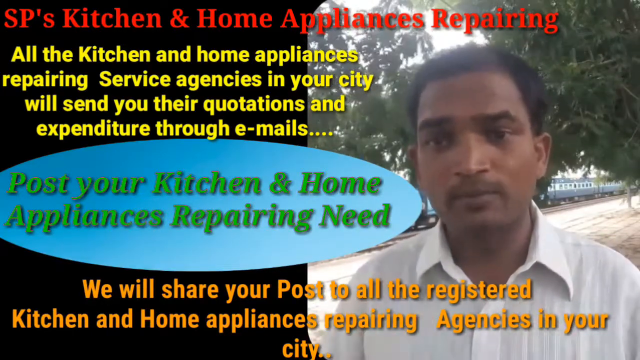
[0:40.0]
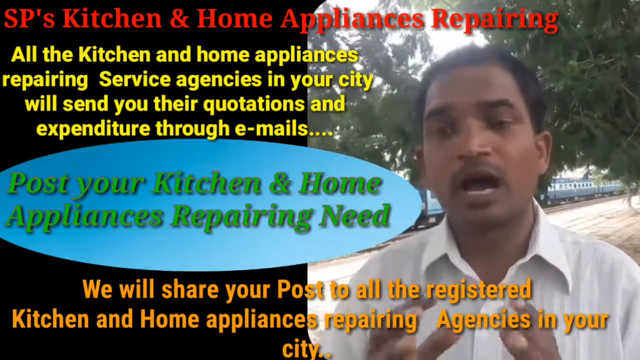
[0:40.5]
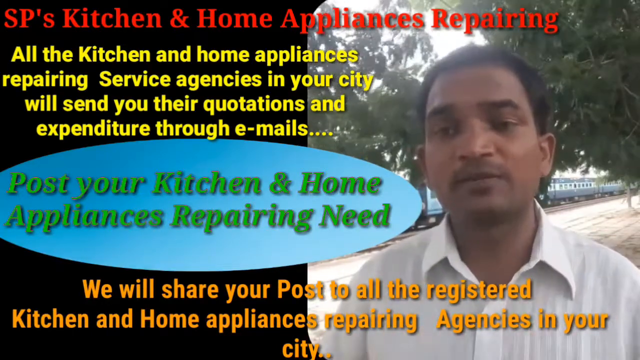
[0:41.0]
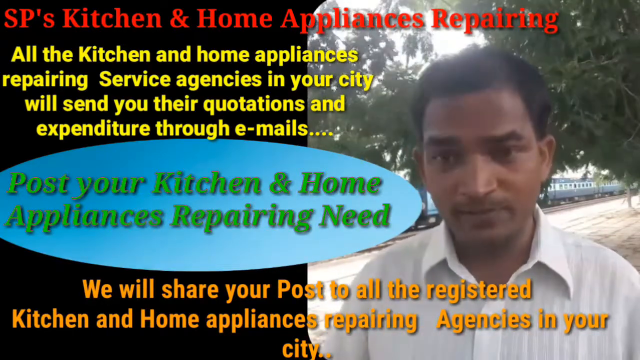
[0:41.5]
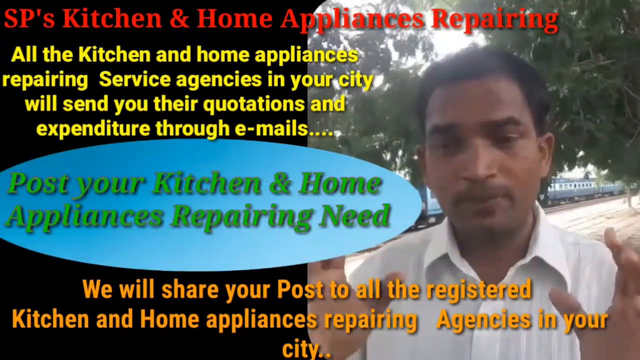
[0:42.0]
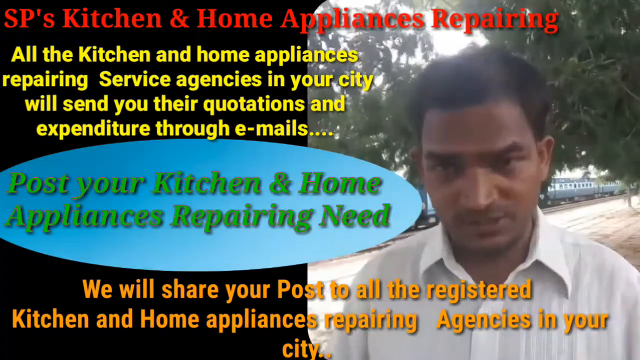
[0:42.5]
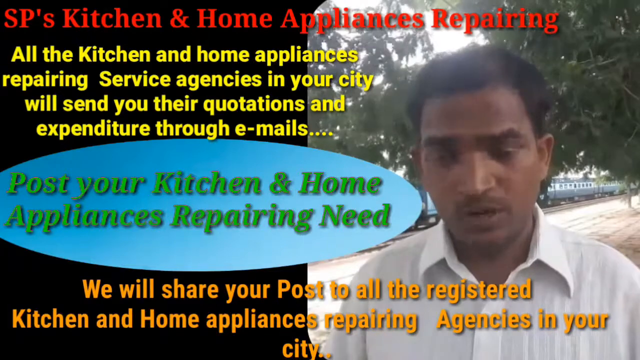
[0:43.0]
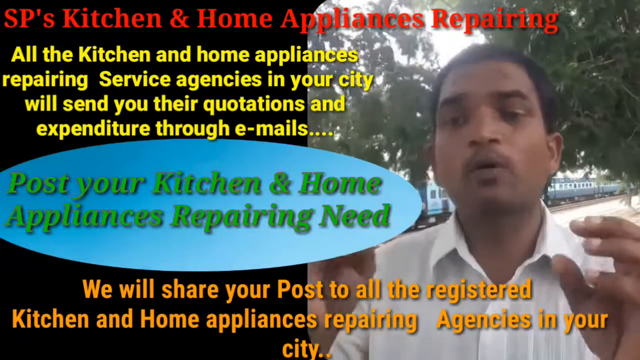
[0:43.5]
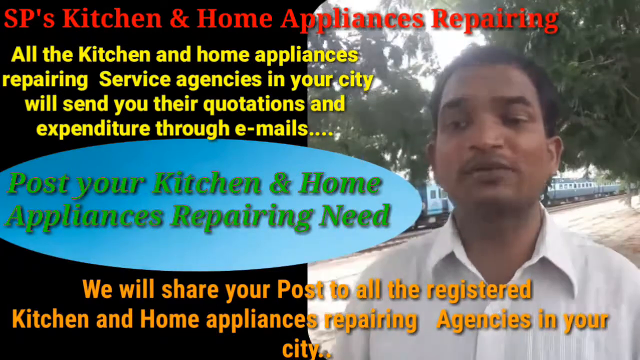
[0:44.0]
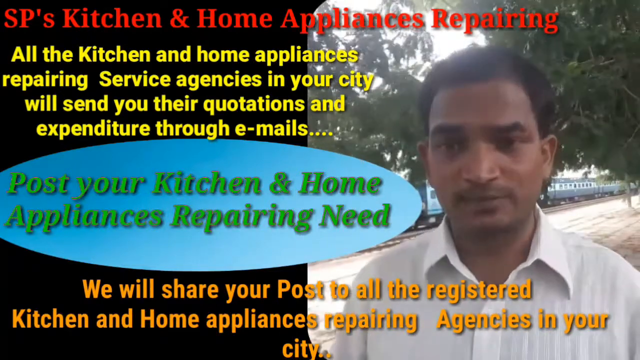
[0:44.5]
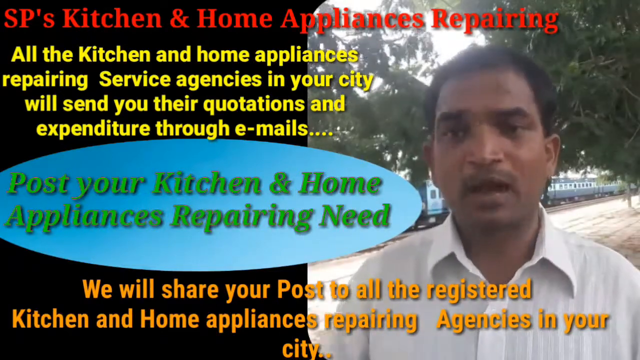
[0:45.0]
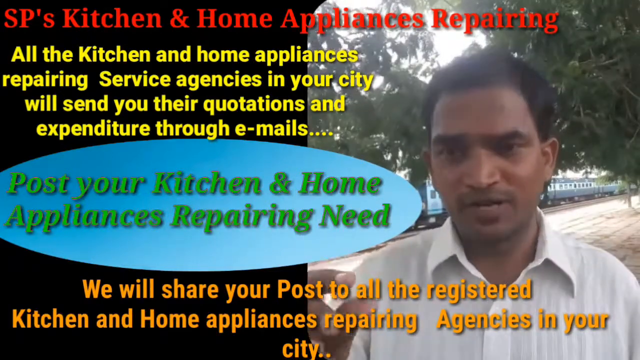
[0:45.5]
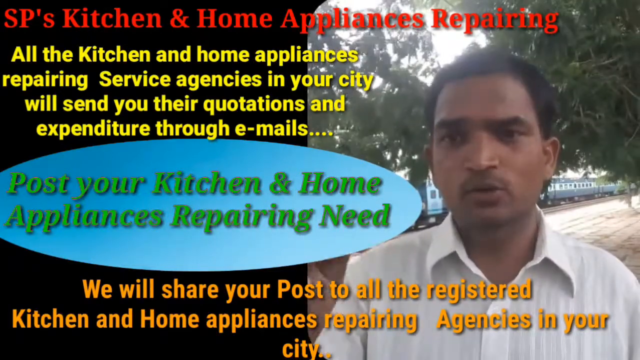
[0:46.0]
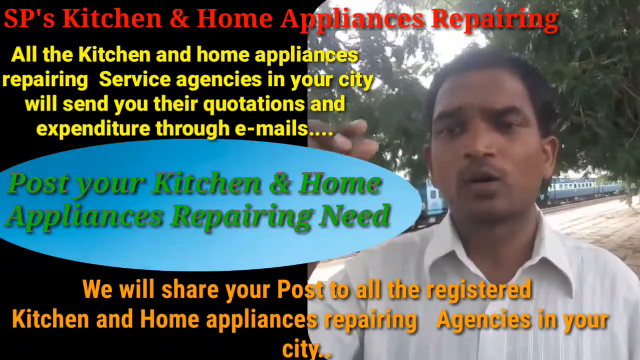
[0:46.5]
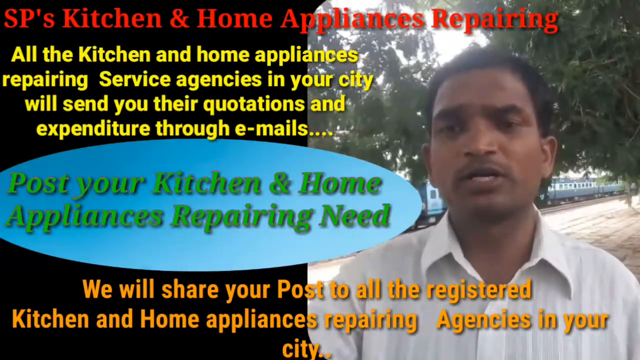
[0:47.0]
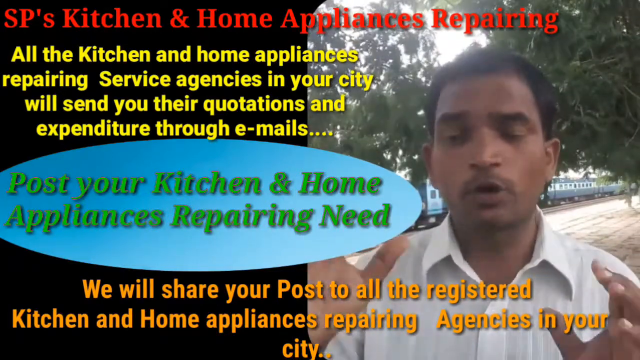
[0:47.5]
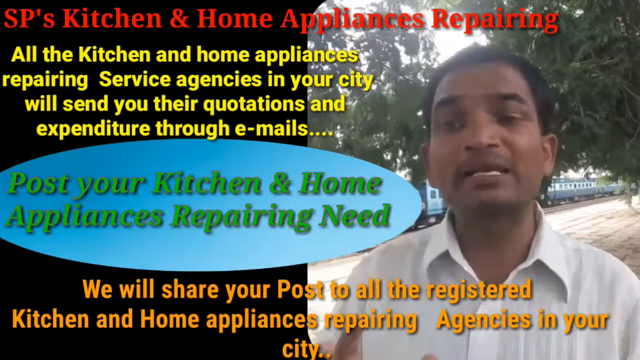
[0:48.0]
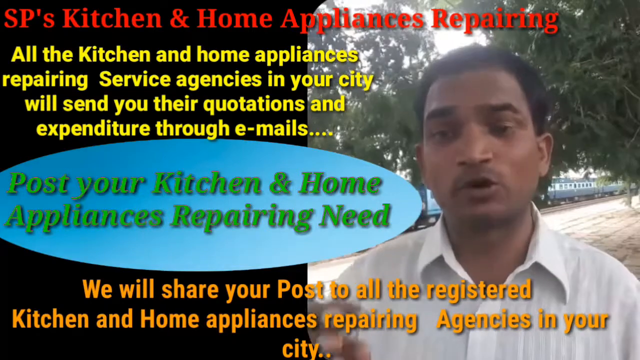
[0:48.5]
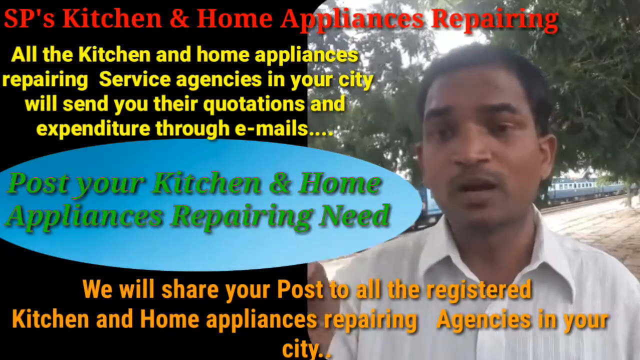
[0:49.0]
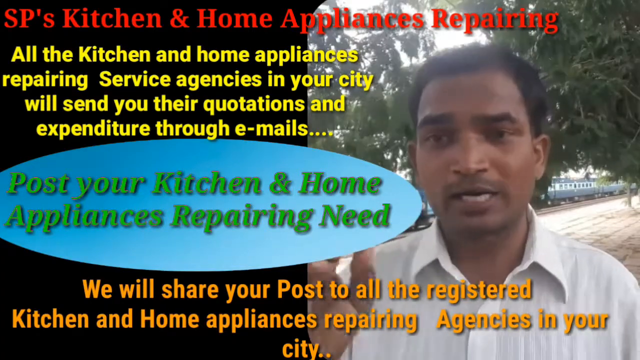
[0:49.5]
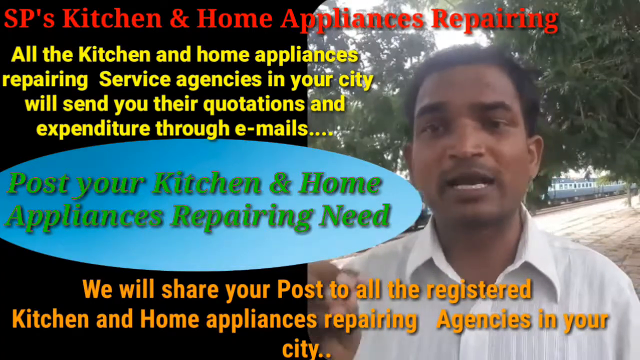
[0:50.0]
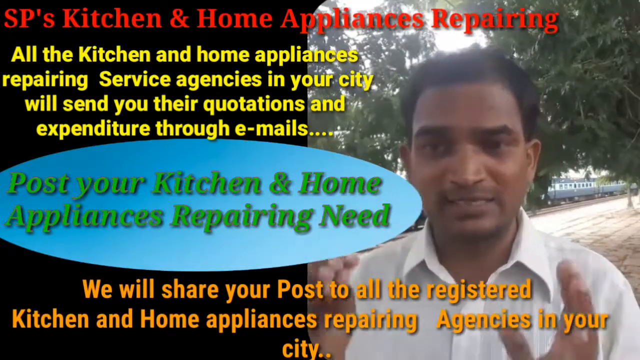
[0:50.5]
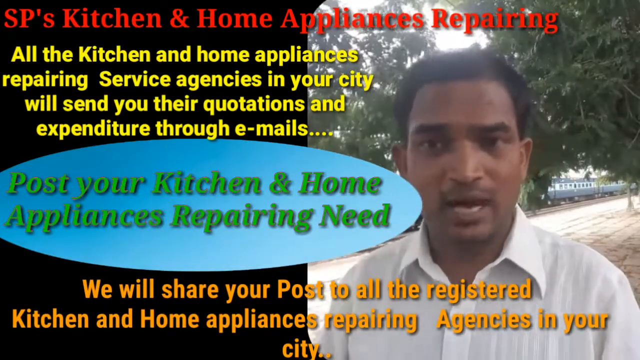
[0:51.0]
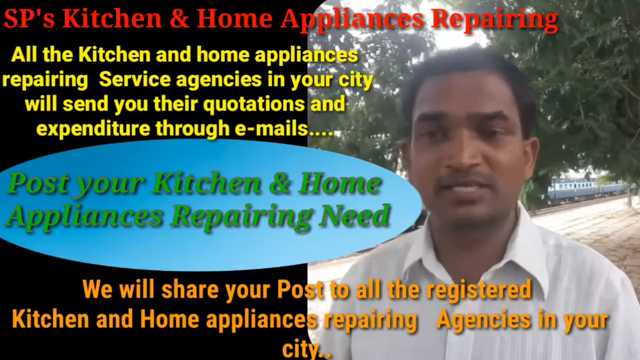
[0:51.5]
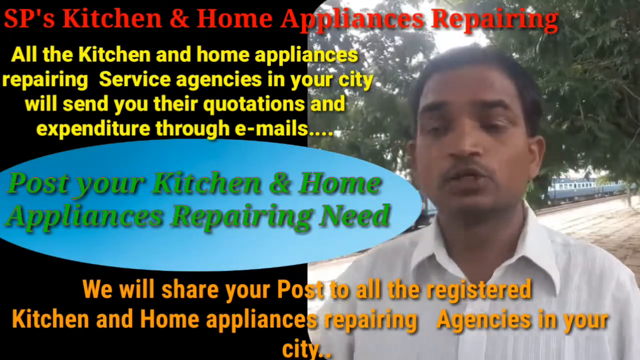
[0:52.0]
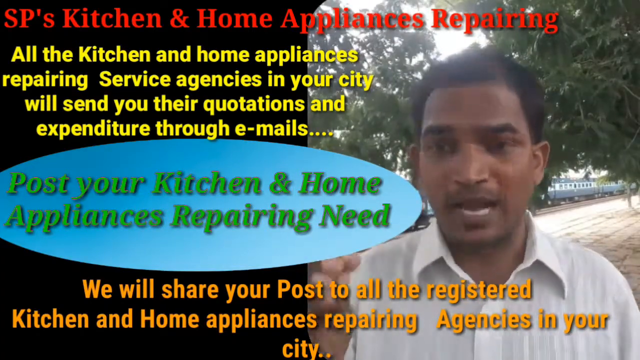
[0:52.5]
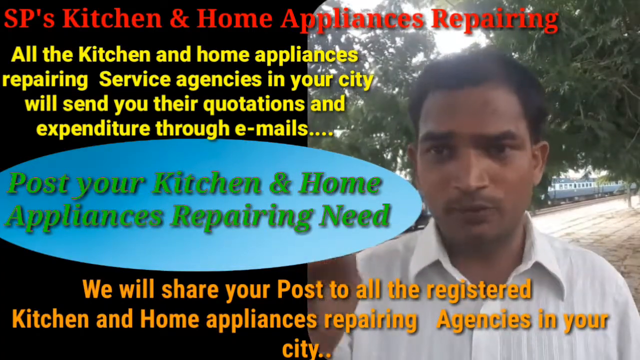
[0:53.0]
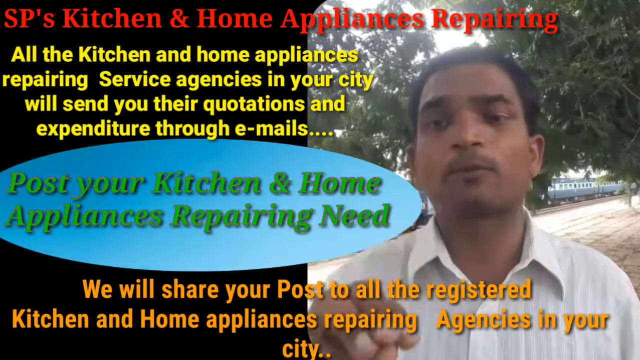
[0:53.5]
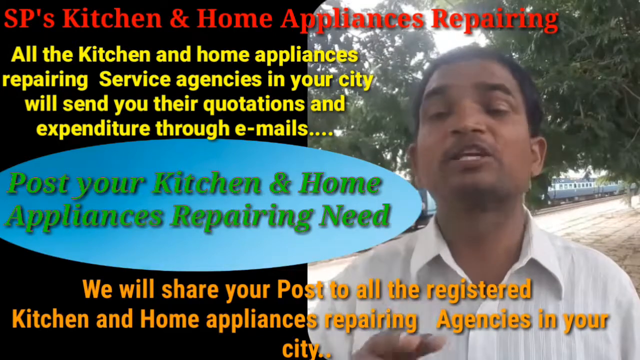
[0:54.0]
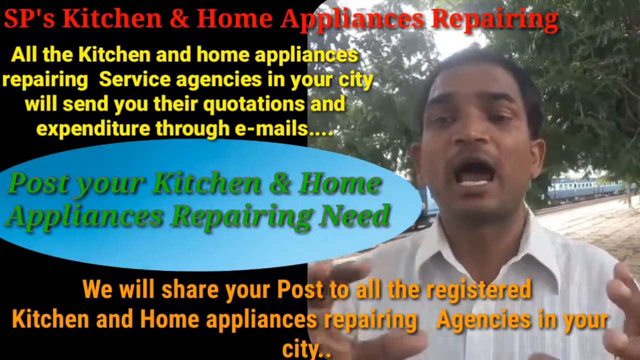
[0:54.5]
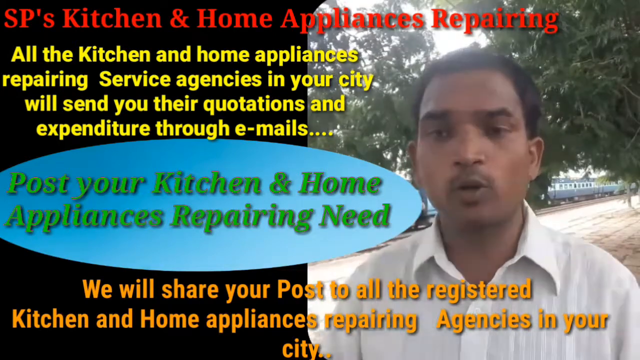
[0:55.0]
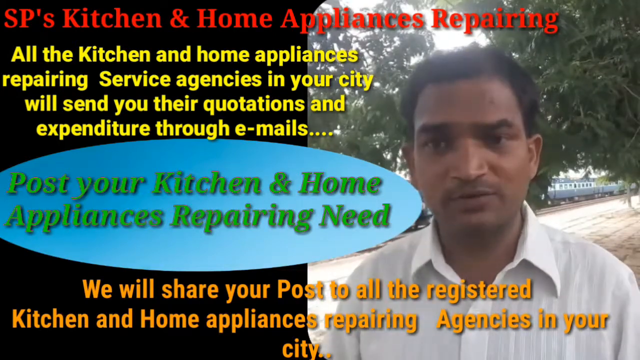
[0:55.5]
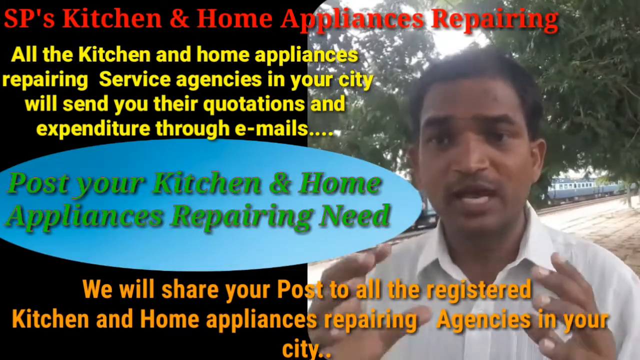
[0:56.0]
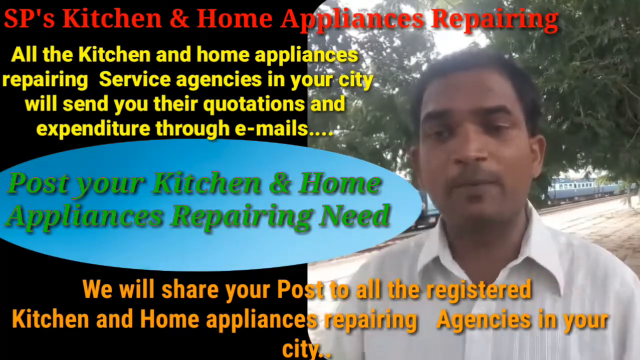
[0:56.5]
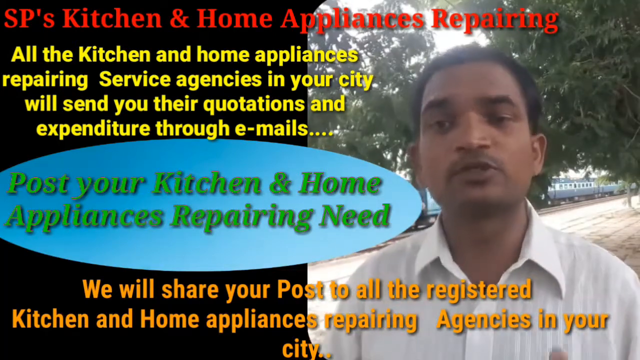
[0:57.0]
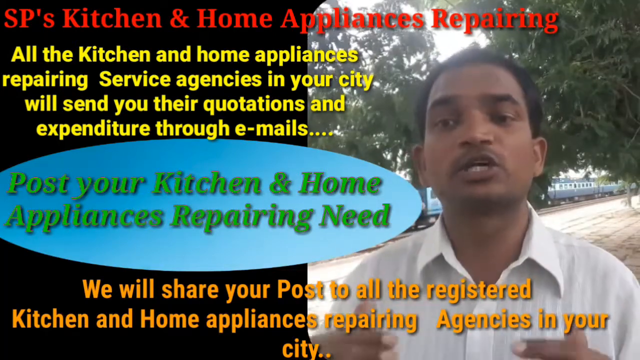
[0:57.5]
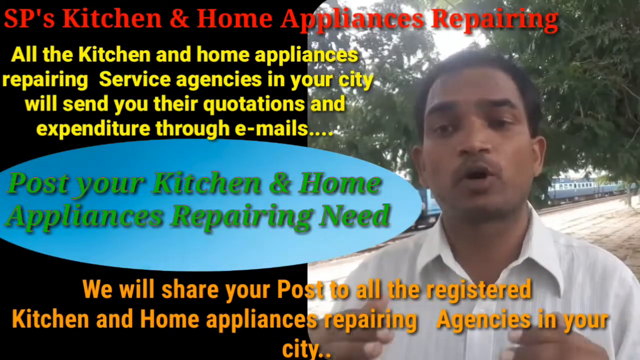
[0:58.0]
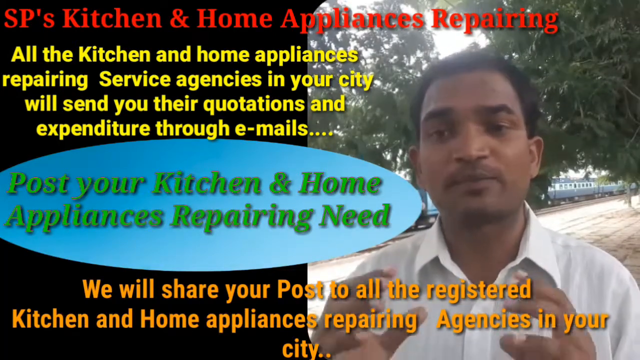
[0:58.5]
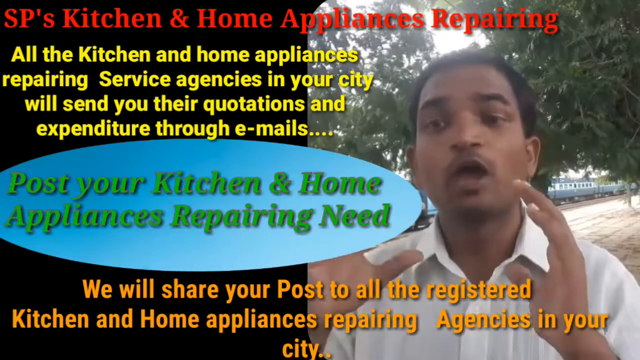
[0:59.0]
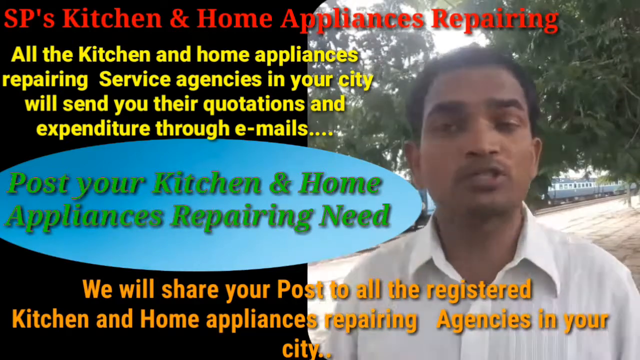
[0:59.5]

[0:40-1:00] A man appears to be outside, with trees and nature behind him. Text on screen reads "SP's kitchen and home appliance repairing," "all the kitchen and home appliances repairing service agencies in your city will send you their quotations and expenditure through emails," "post your kitchen and home appliances repairing need," and "we will share your post to all registered kitchen and home appliance repairing agencies in your area." The text is broken up into separate blurbs. The man continues talking to the camera, and the view does not change.